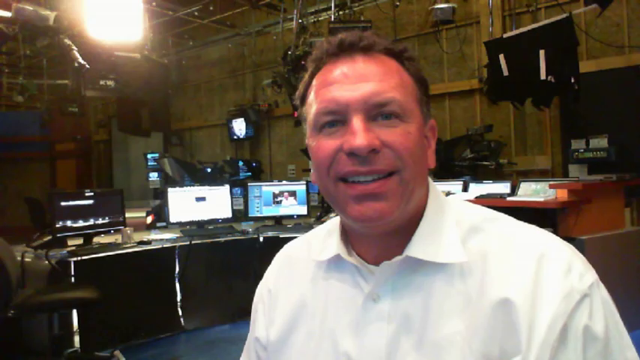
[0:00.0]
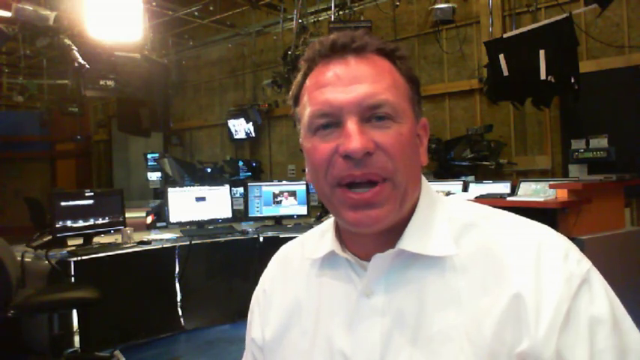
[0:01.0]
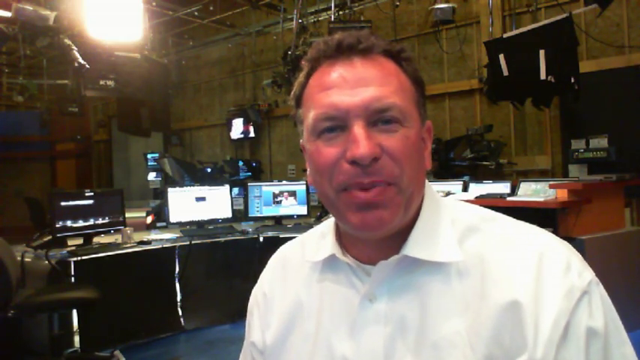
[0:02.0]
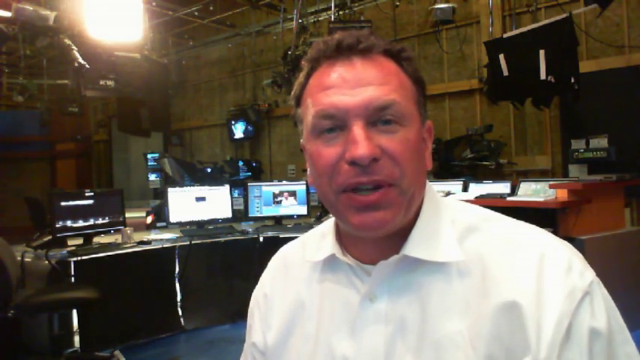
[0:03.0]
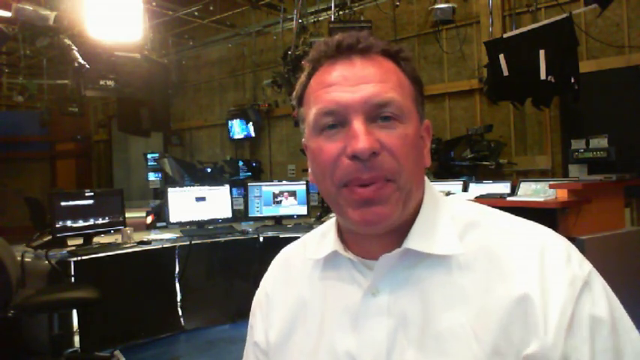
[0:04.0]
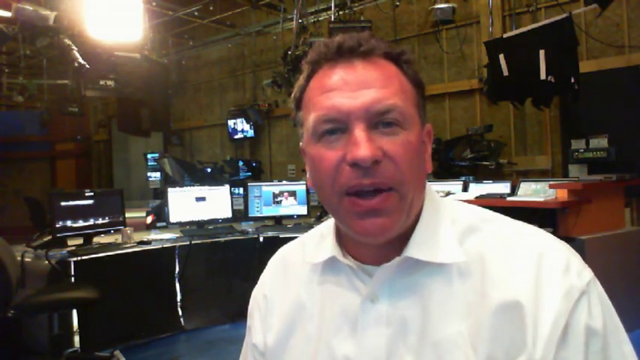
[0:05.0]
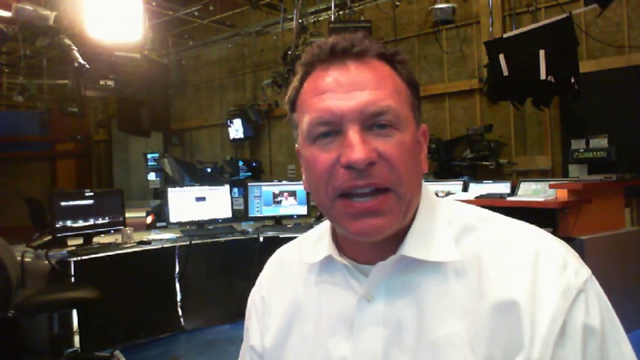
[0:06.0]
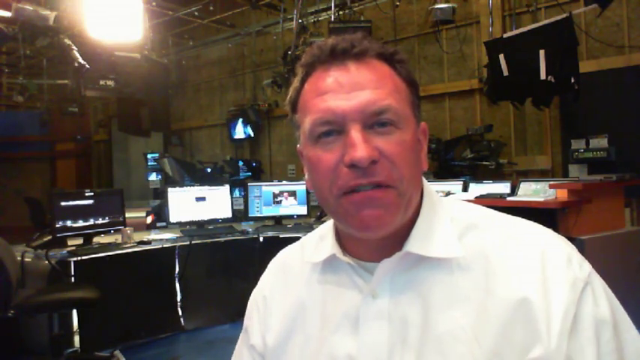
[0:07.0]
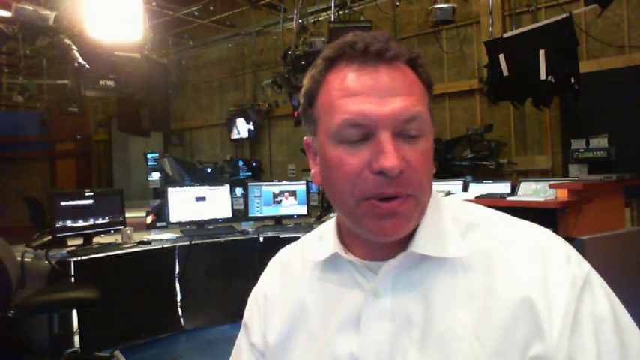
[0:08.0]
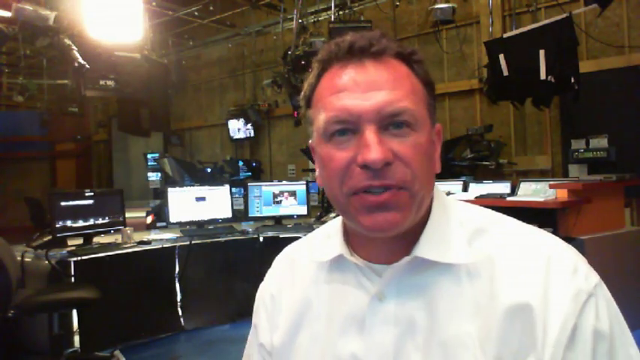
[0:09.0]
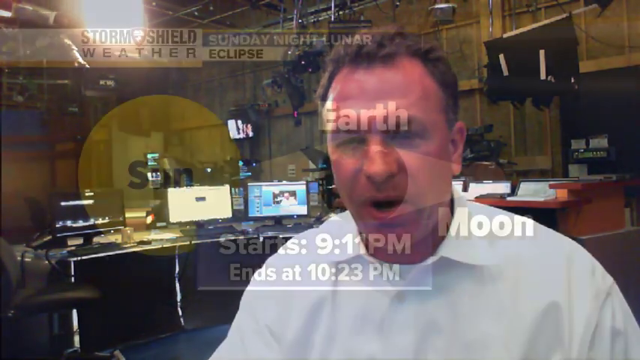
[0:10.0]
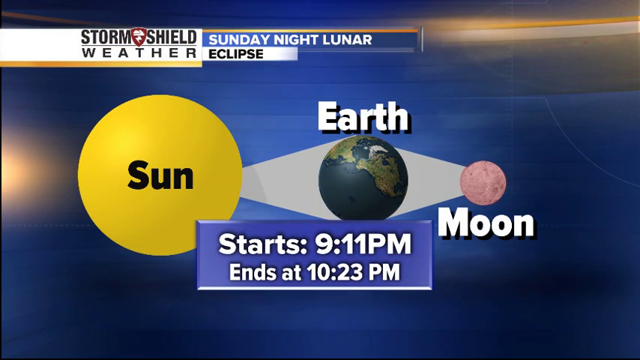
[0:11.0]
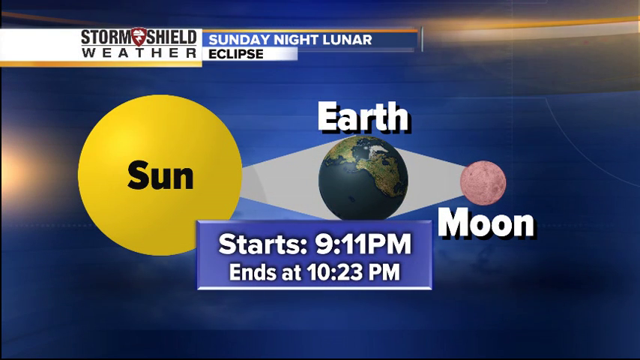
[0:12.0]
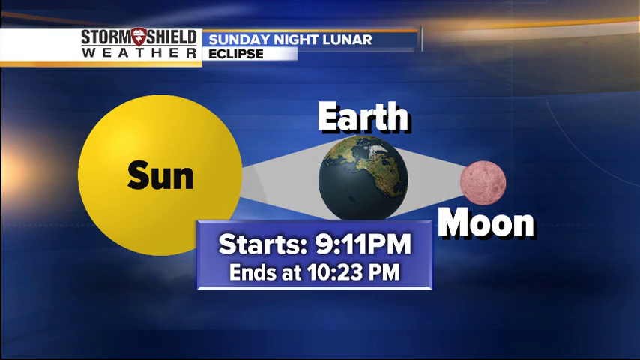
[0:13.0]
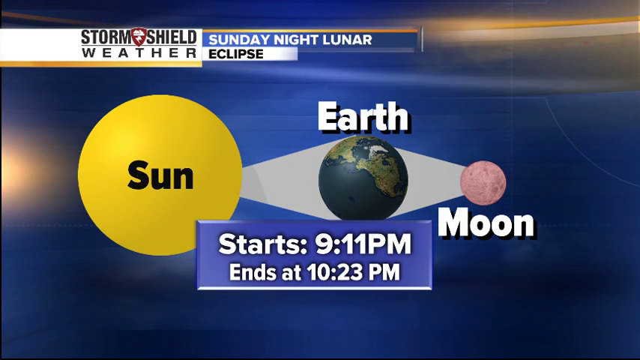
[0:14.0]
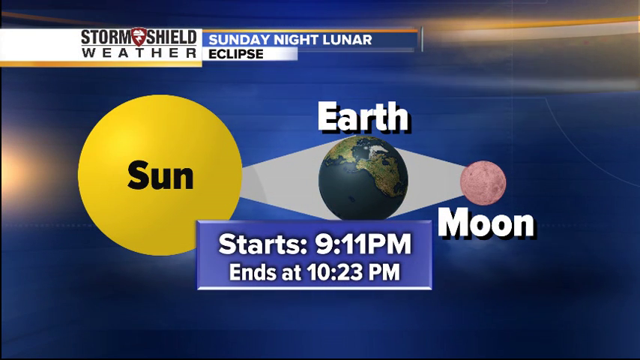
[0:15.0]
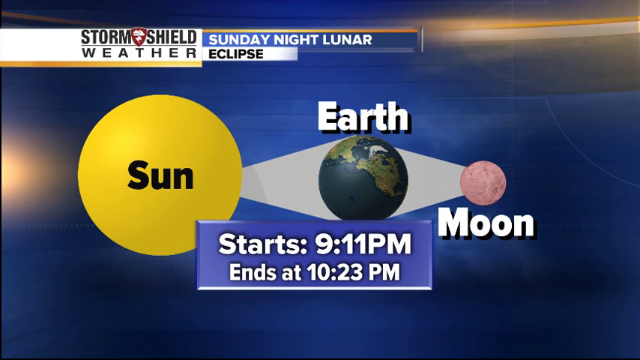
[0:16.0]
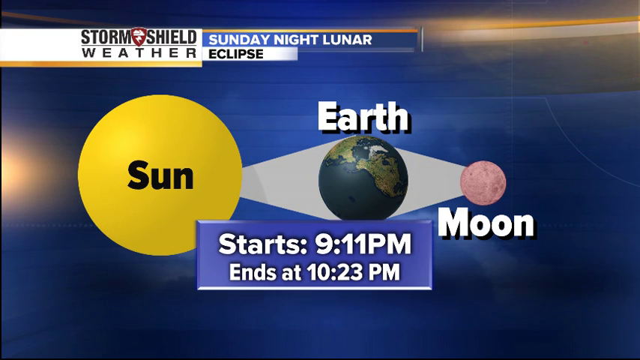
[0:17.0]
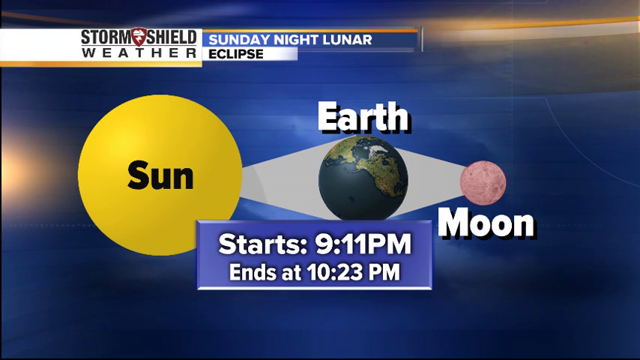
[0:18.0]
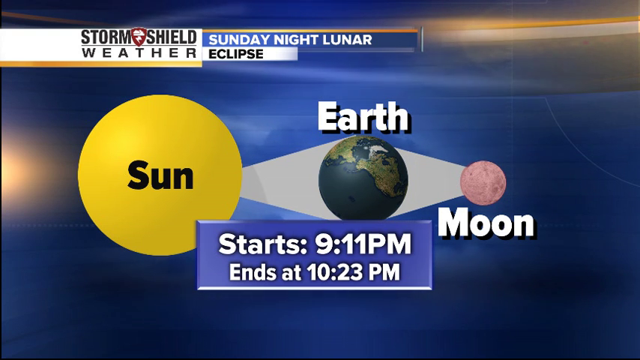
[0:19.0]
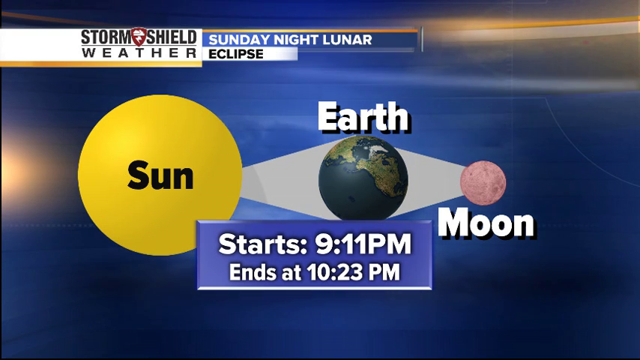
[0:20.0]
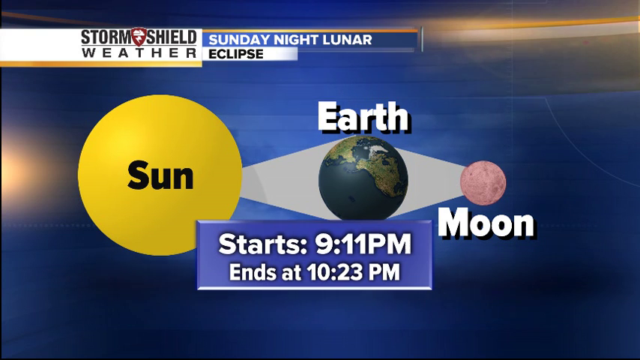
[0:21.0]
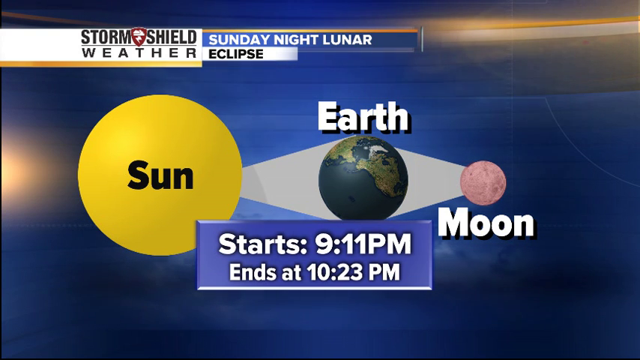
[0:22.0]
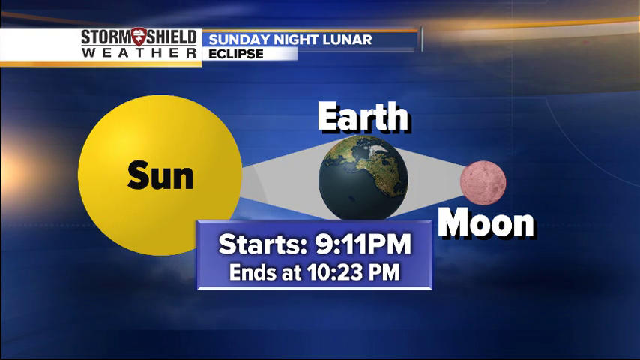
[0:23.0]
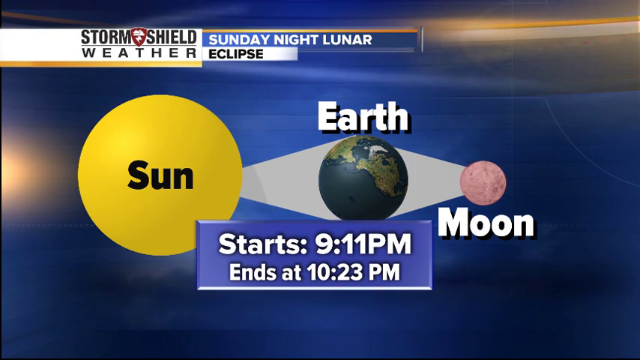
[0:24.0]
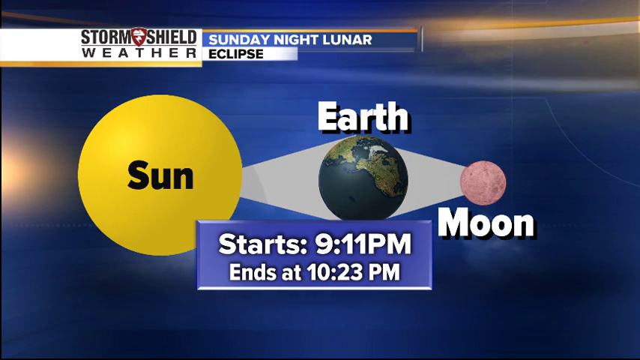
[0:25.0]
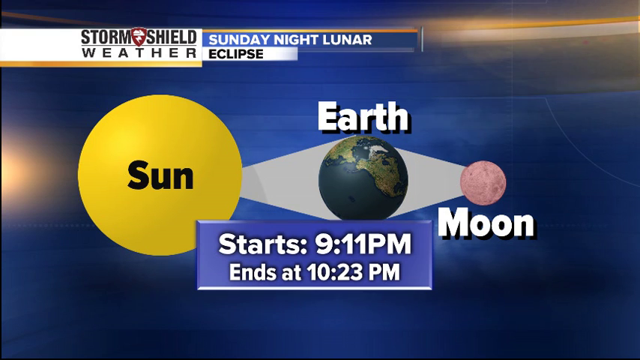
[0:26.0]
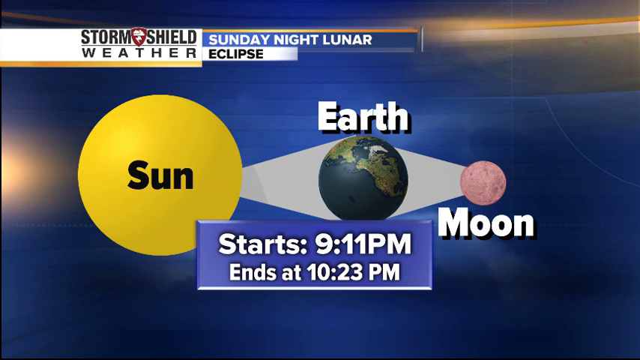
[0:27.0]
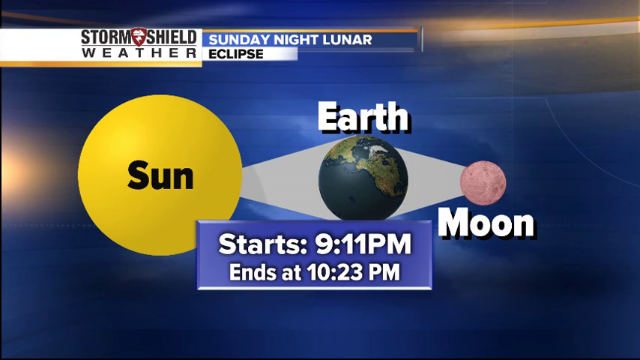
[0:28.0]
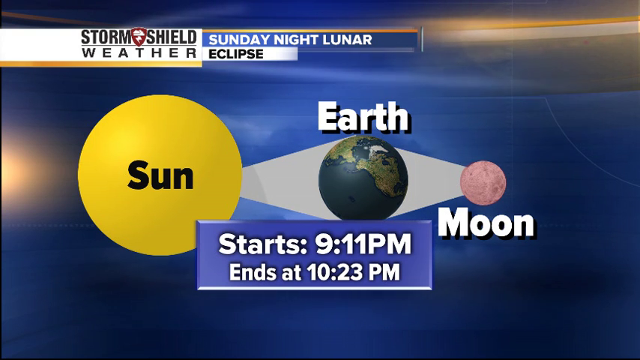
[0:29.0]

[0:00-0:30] A Caucasian man wears a white button-up dress shirt with a t-shirt underneath. He has a very big forehead and some light brown hair, and he appears to be in a warehouse-like setting. A big window lets light in from the ceiling, and behind him appears to be a large table with several computer screens. A TV is mounted in the back, and there is also a chair. The man is talking, and while he talks the video screens in the back change. The camera then shows the sun, the earth and the moon for the Sunday night lunar eclipse, which starts at 9:11 p.m. and ends at 10:23 p.m. Against a blue background there is a yellow sun, then a globe showing the earth, and the moon is depicted as pink, with a white diamond connecting the sun, the earth and the moon. This is the Storm Shield Weather report.